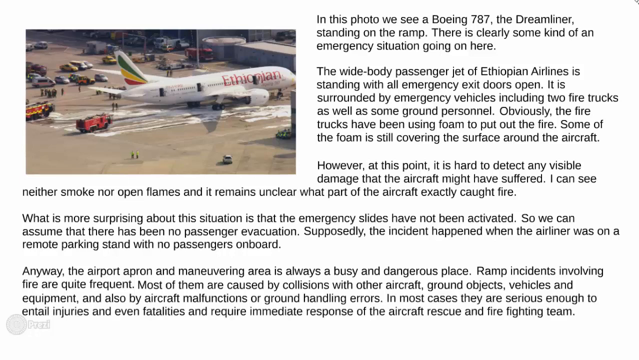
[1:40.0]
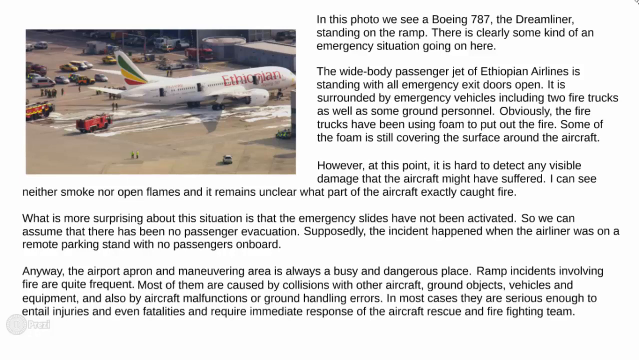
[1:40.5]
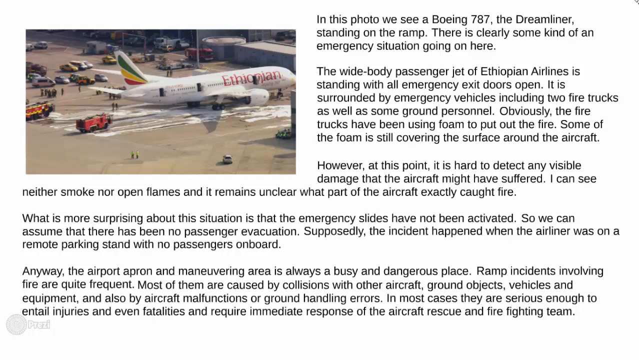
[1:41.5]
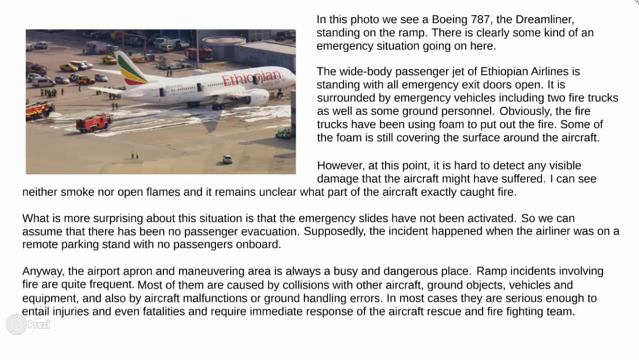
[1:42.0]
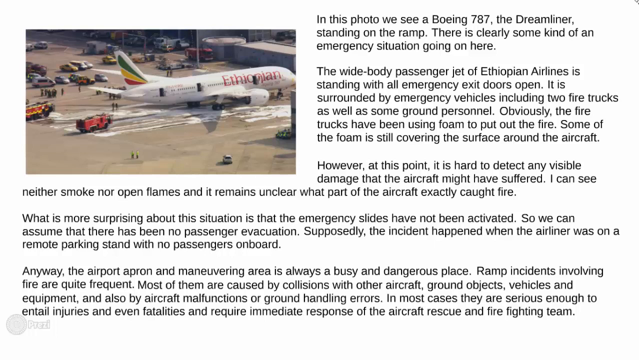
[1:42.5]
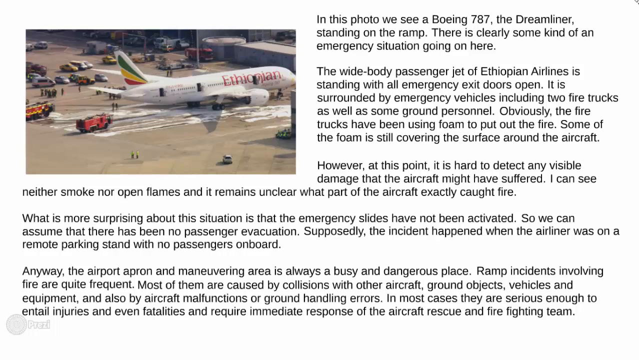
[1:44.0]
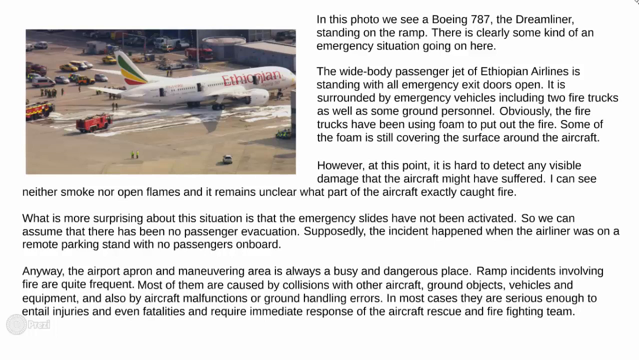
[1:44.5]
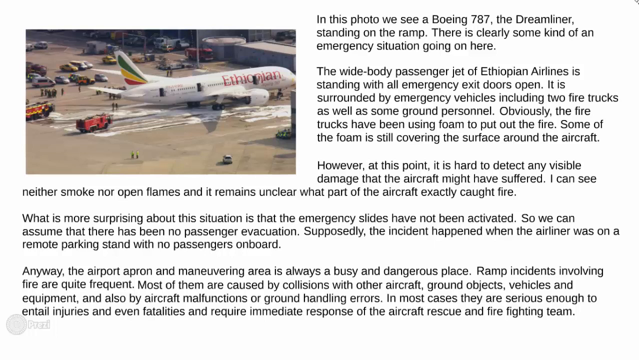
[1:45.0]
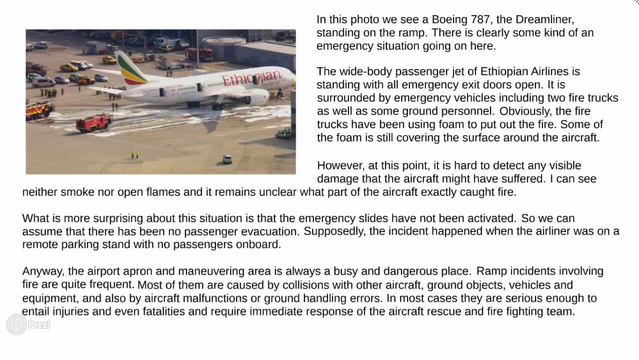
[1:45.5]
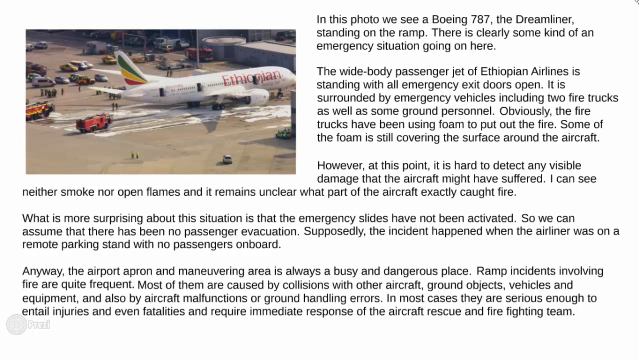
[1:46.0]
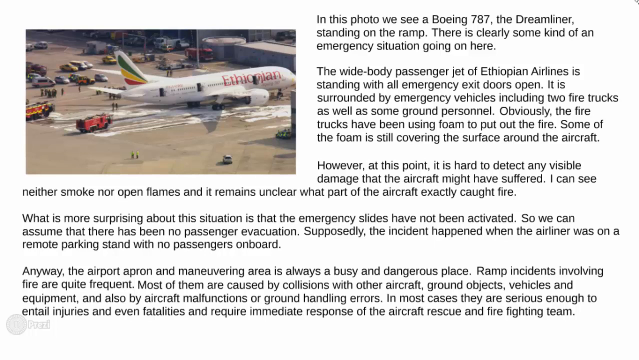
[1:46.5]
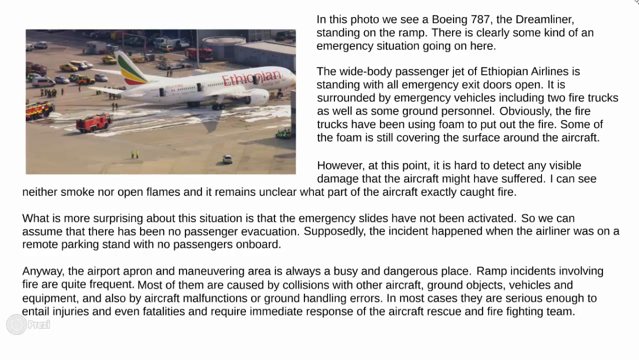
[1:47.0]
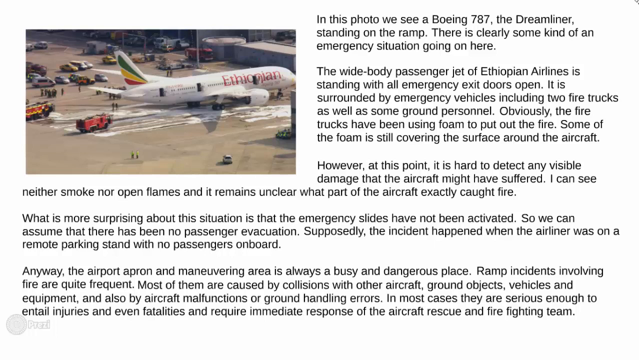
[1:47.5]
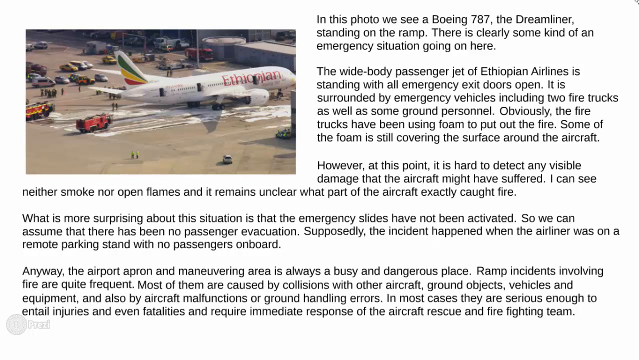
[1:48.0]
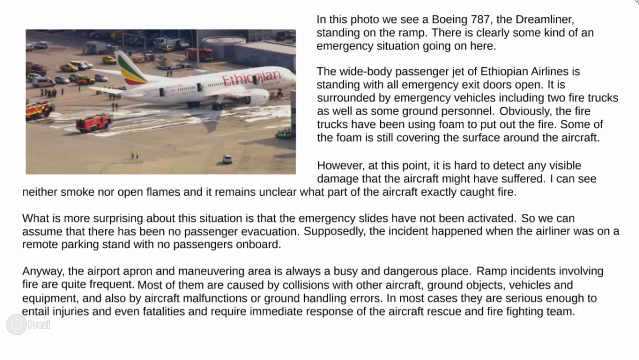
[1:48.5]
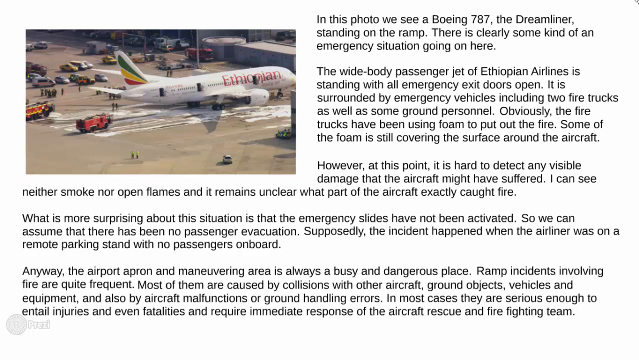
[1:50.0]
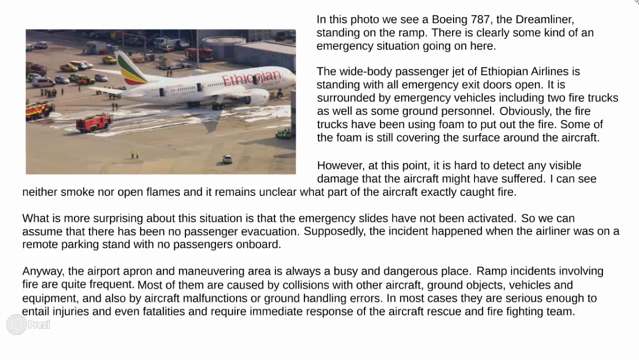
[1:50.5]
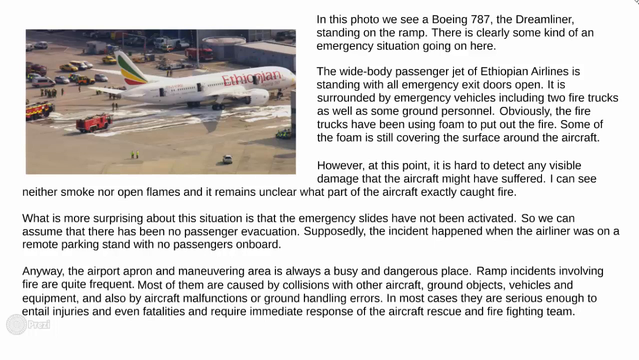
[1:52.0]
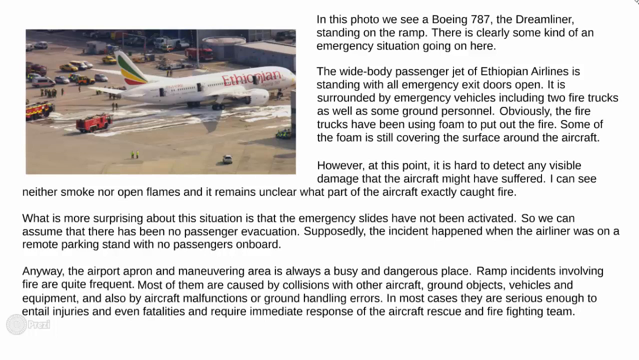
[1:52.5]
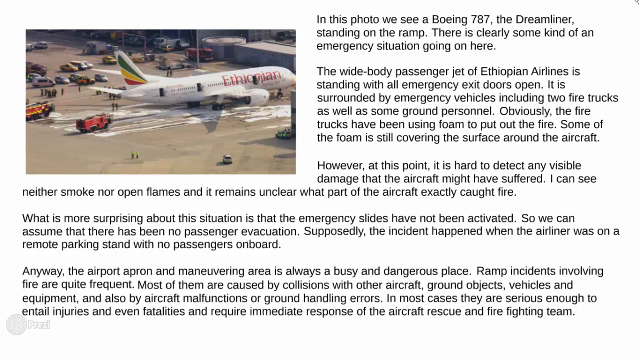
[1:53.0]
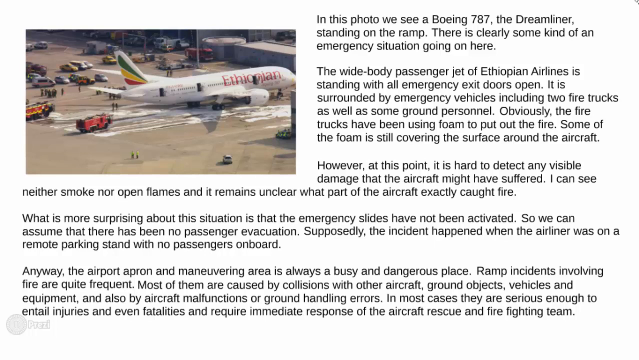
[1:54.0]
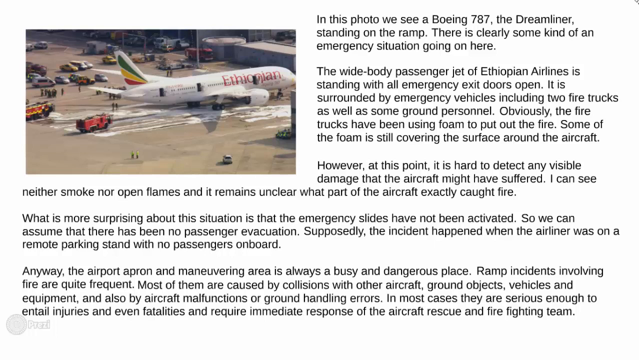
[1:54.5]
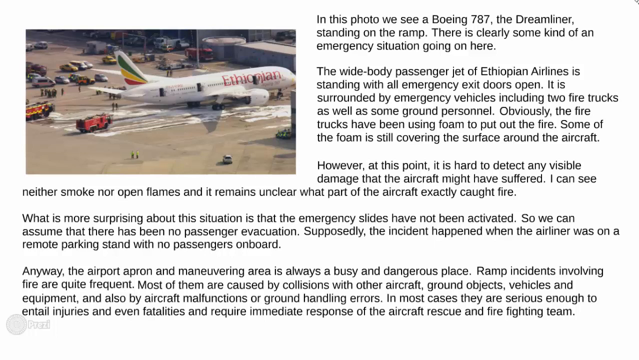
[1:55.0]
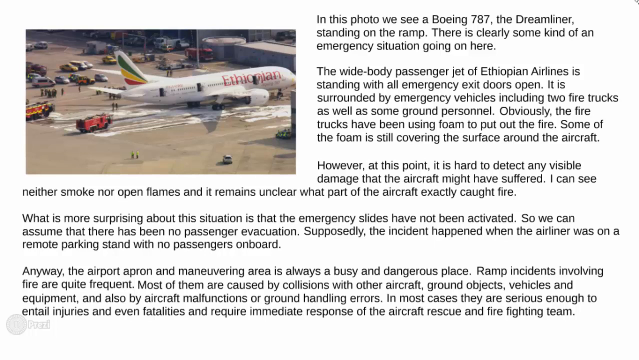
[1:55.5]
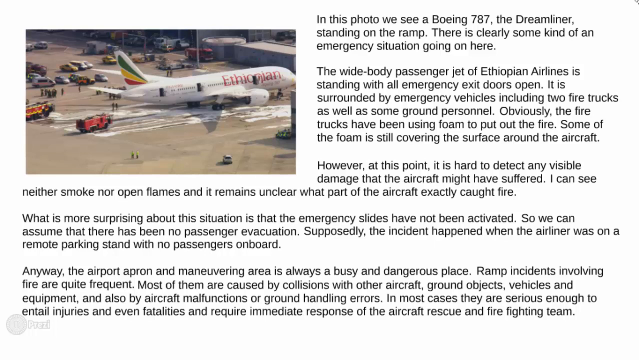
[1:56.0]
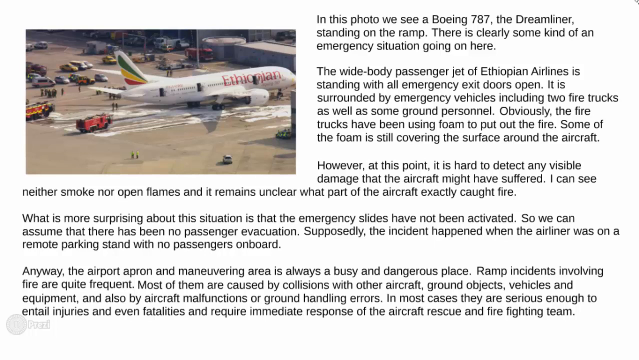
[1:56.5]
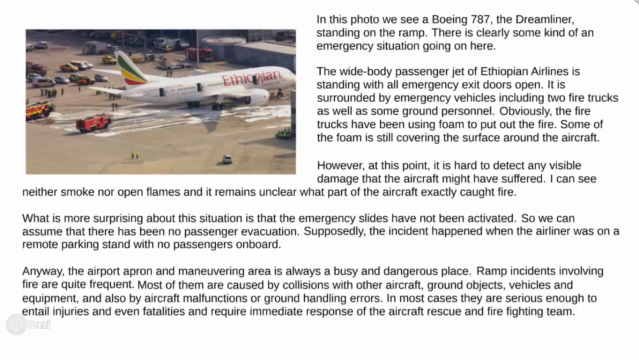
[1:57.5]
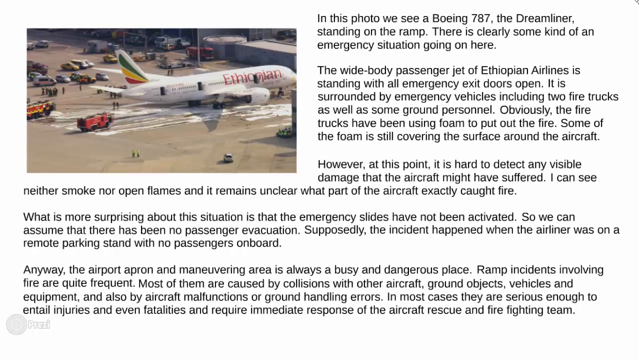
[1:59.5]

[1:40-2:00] The same words remain on screen, including: "In this photo we see a Boeing 787, the Dreamliner, standing on the ramp. There is clearly some kind of an emergency situation going on here. The wide-body passenger jet of Ethiopian Airlines is standing with all emergency exit doors open. It is surrounded by emergency vehicles, including two fire trucks, as well as some ground personnel. Obviously, the fire trucks have been using foam to put out the fire. Some of the foam is still covering the surface around the aircraft. However, at this point, it is hard to detect any visible damage that the aircraft might have suffered." In the upper left-hand corner is the picture of the airplane with "Ethiopian" on its side. The video is rectangular.